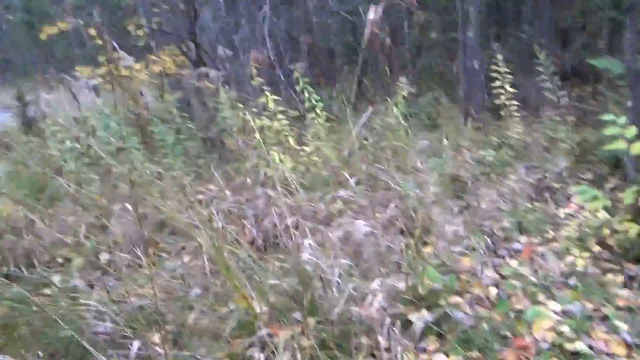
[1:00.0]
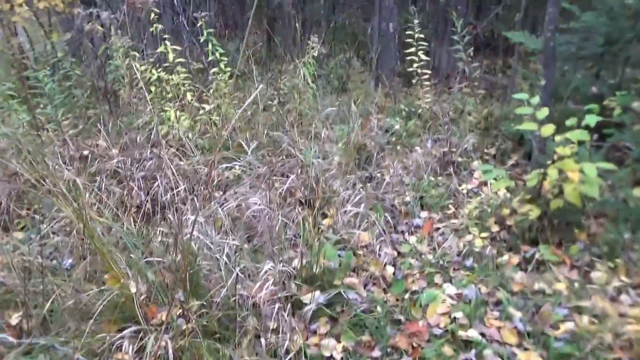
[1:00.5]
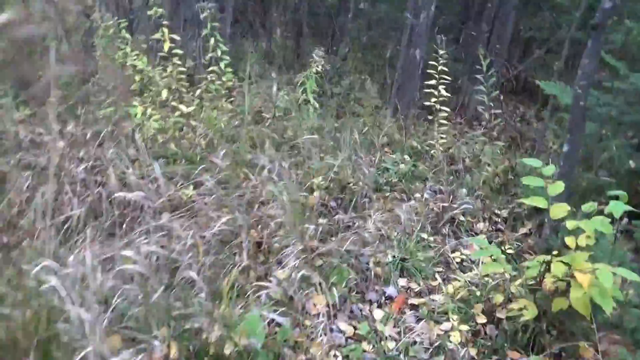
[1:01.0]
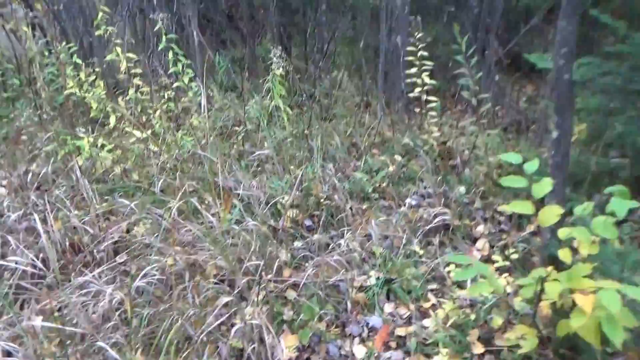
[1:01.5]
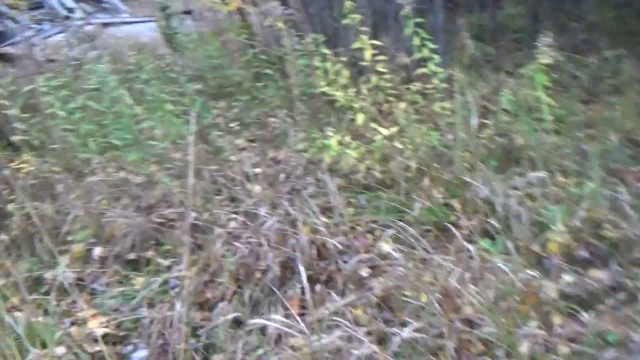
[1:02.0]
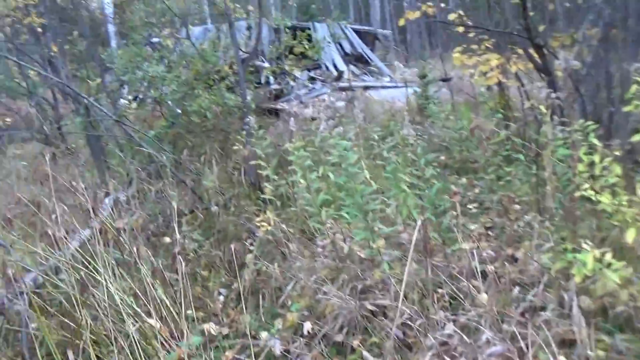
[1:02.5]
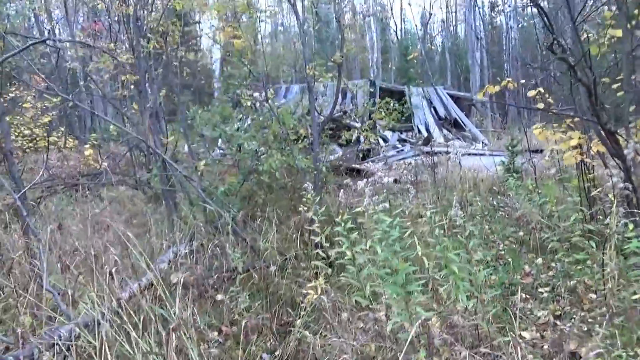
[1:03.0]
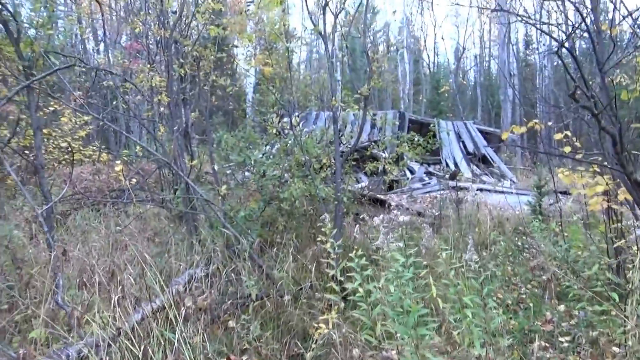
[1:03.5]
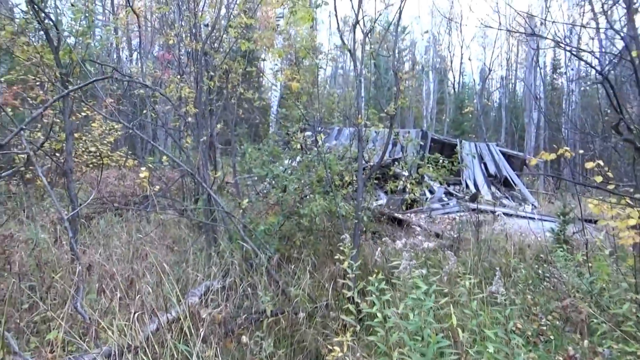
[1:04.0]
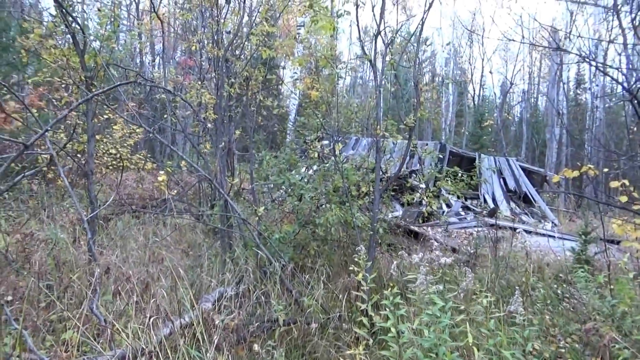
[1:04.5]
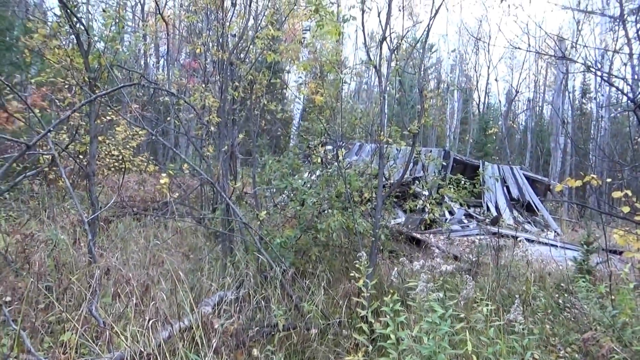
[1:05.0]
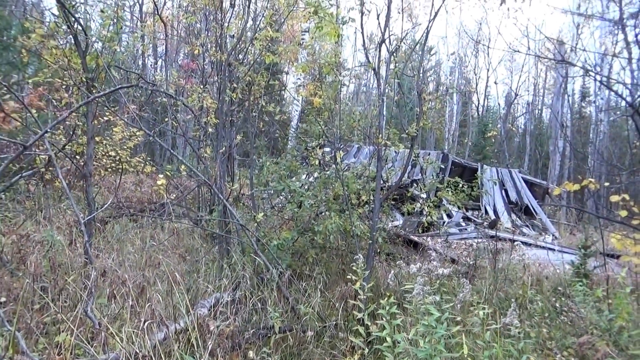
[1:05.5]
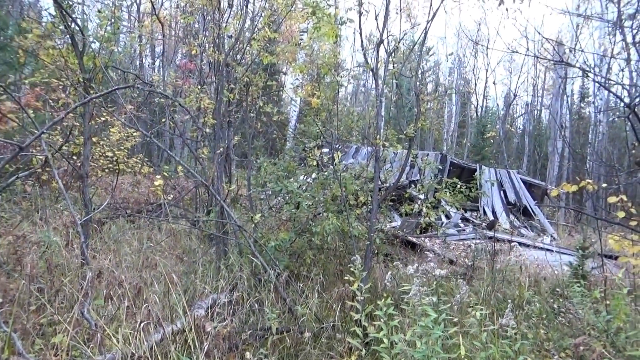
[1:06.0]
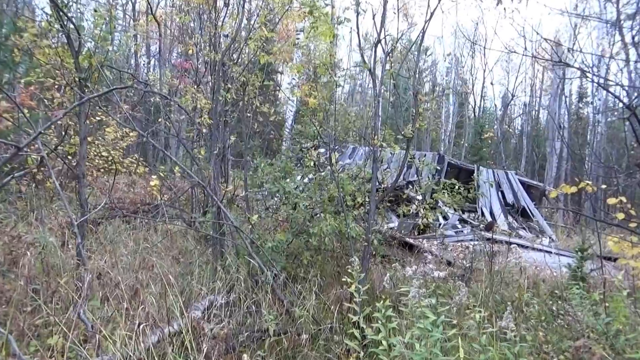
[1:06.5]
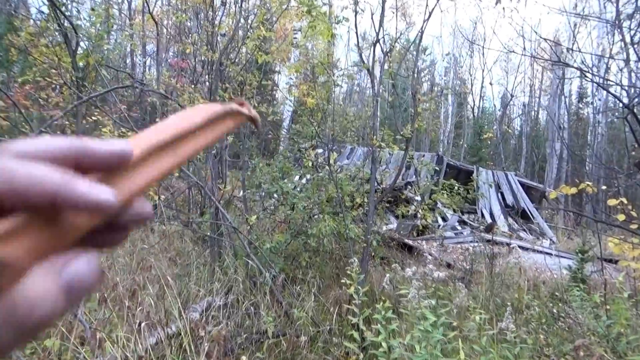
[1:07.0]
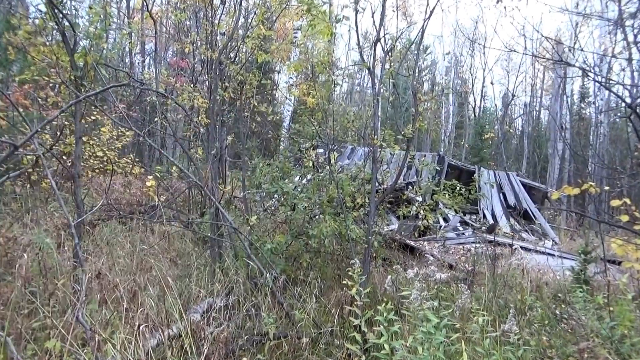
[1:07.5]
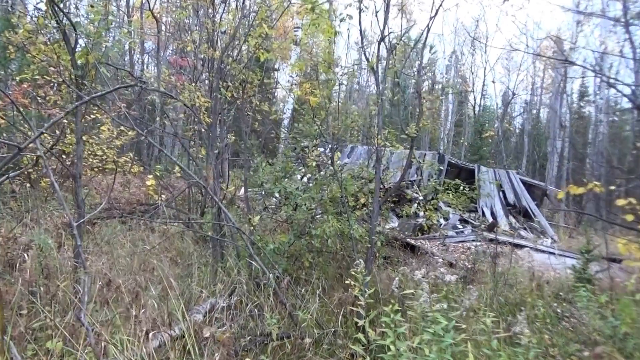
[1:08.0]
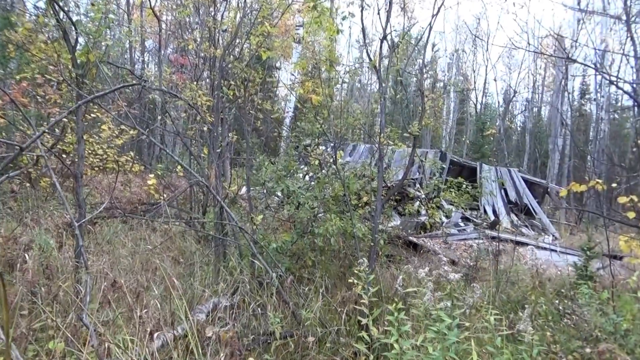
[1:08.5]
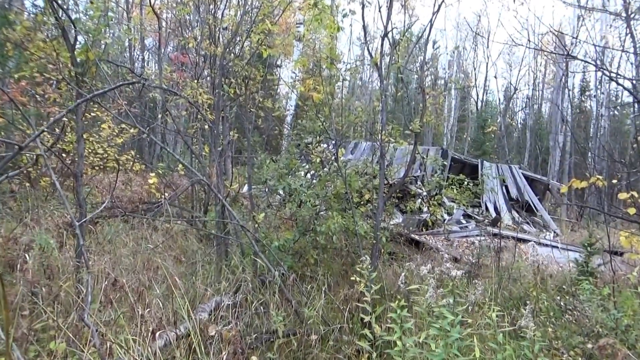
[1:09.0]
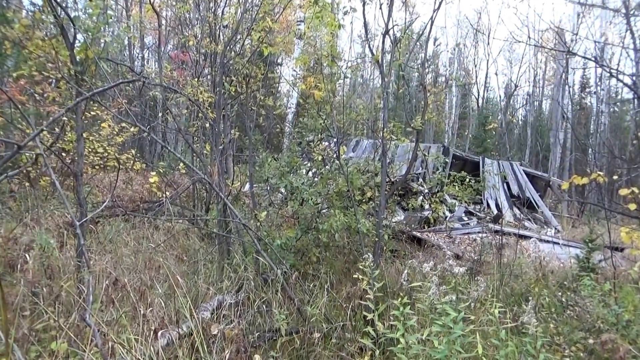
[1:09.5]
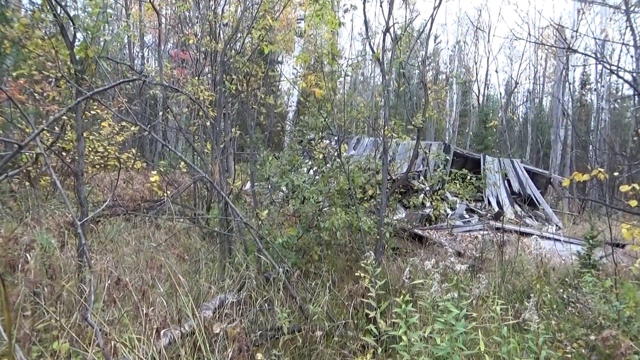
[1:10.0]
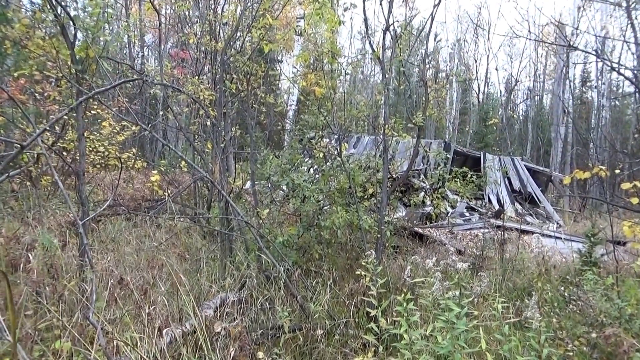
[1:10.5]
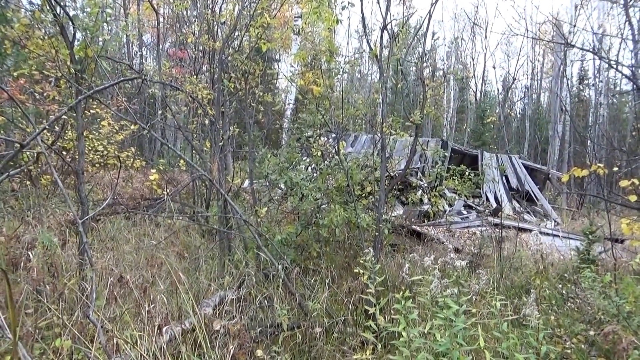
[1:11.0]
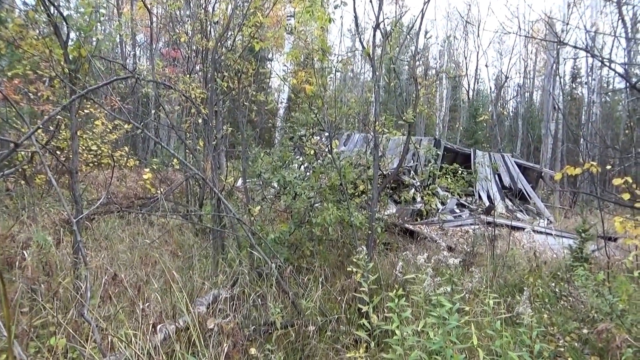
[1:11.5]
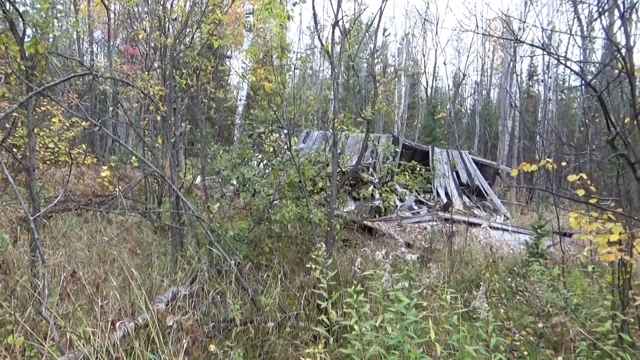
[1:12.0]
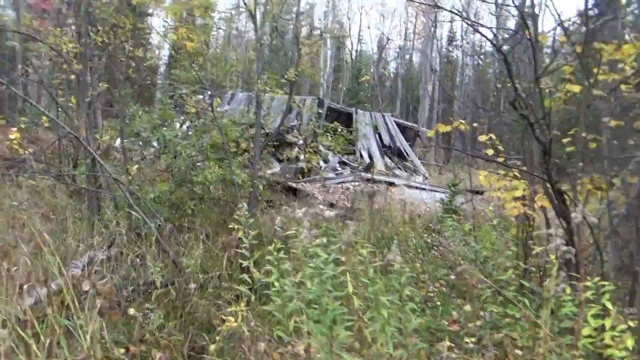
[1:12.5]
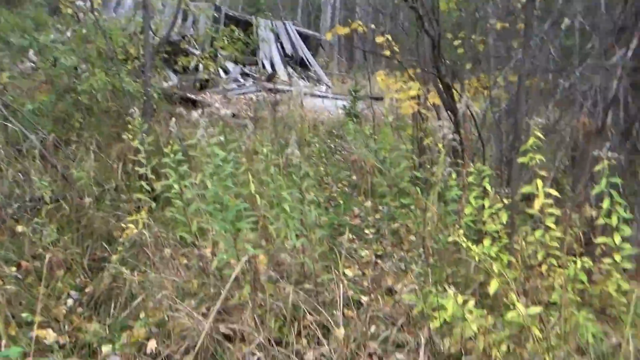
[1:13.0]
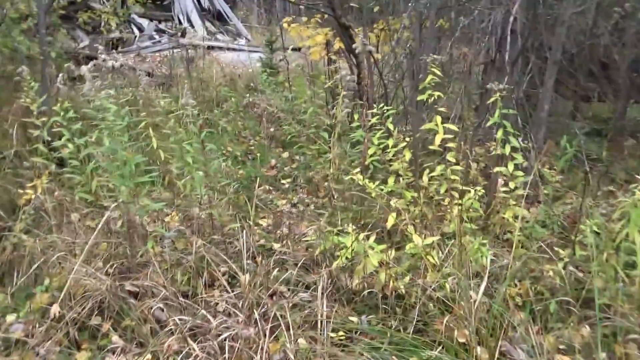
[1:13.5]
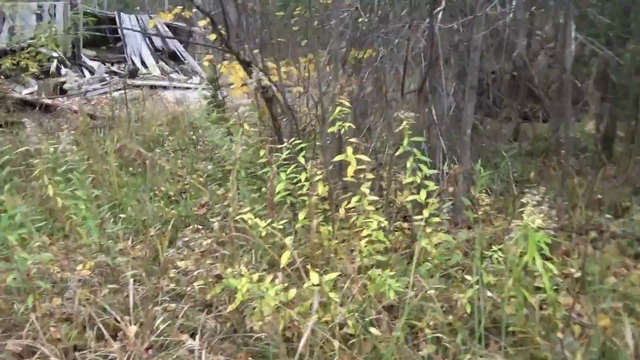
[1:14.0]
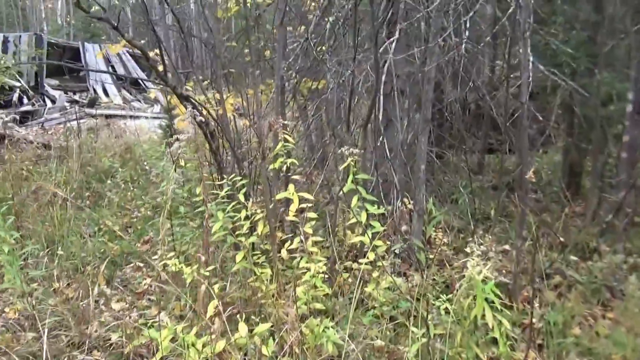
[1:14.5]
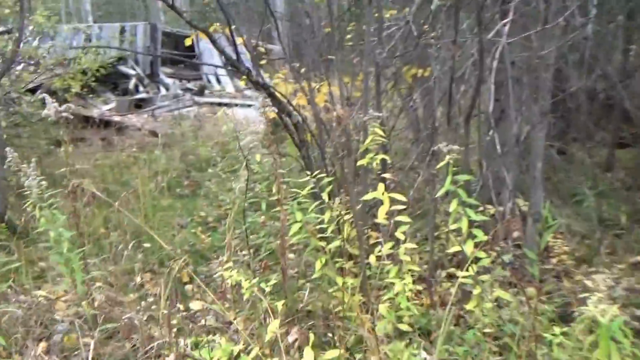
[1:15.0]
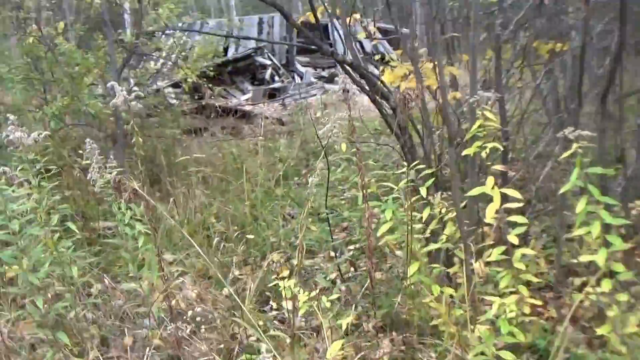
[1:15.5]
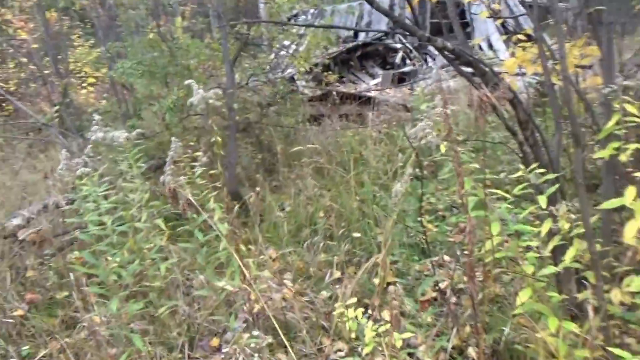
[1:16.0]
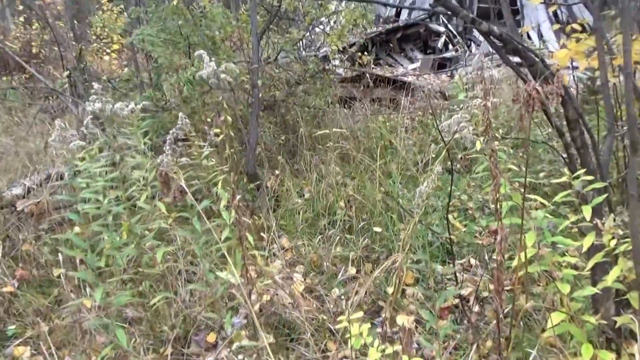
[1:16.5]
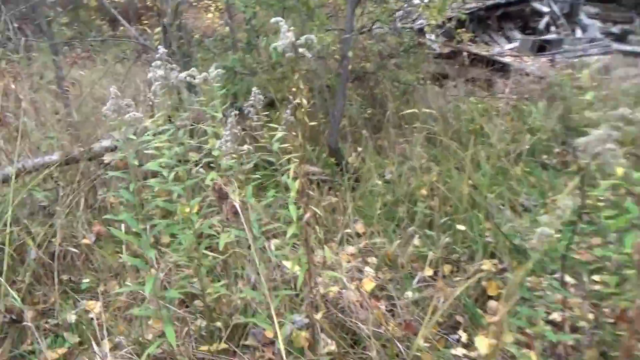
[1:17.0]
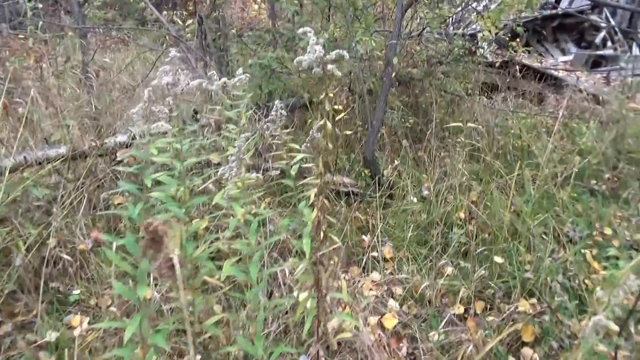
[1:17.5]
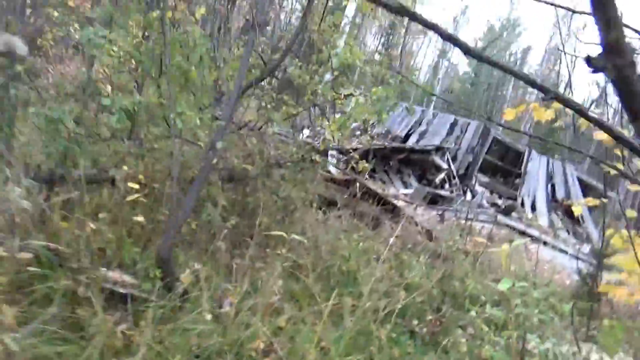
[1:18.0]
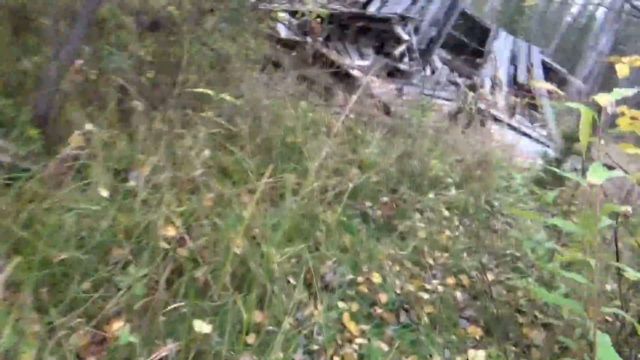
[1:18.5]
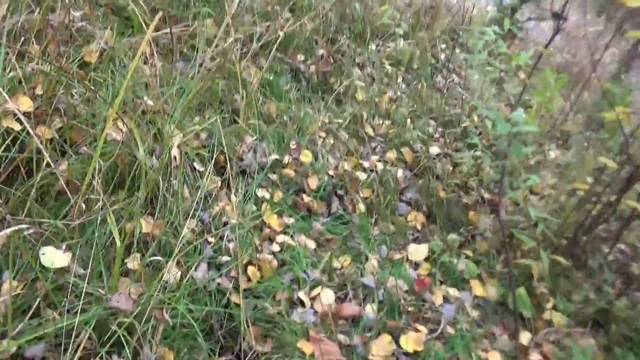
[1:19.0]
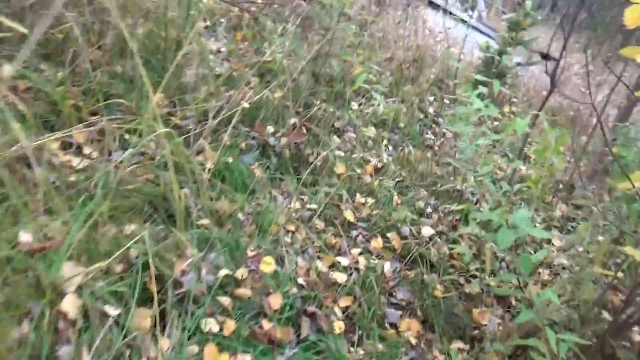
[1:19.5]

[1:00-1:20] The person walks around, panning over the ground; the camera rotates and moves up and left to show a structure in the background that looks like a collapsed wooden roof frame. The person's left hand briefly comes into view, pointing at the collapsed structure. He keeps moving towards it; it has broken wooden beams on top on the right side. The camera focuses on the grass and ground just in front of him as he walks slowly forward towards the structure.